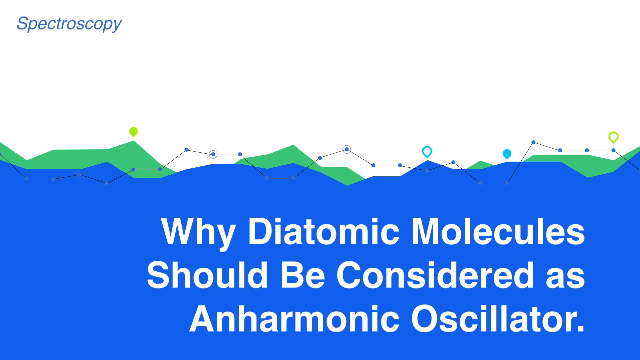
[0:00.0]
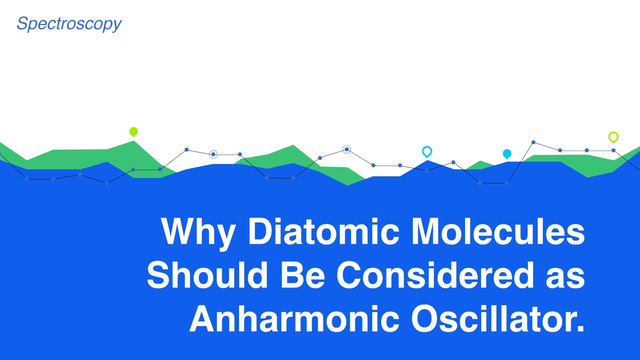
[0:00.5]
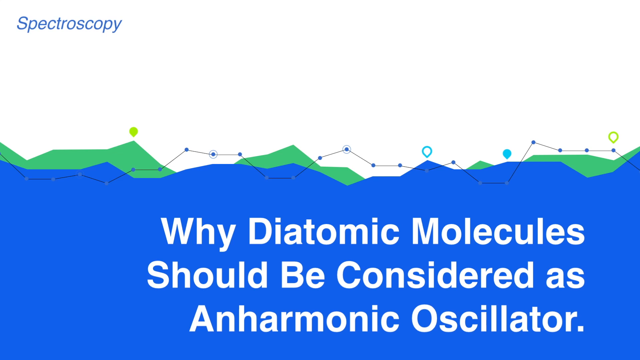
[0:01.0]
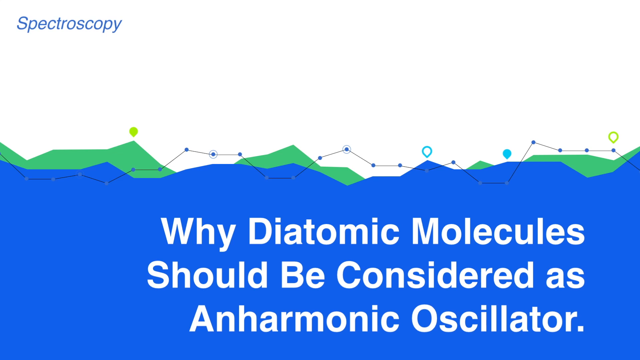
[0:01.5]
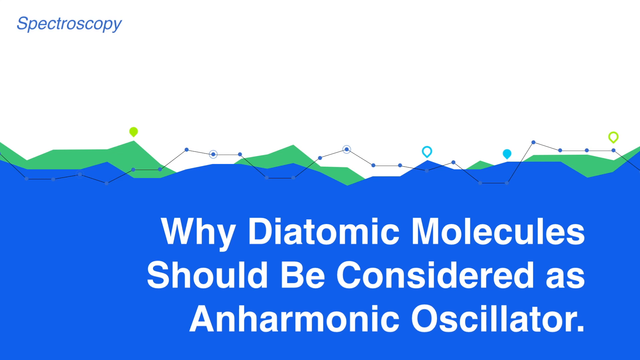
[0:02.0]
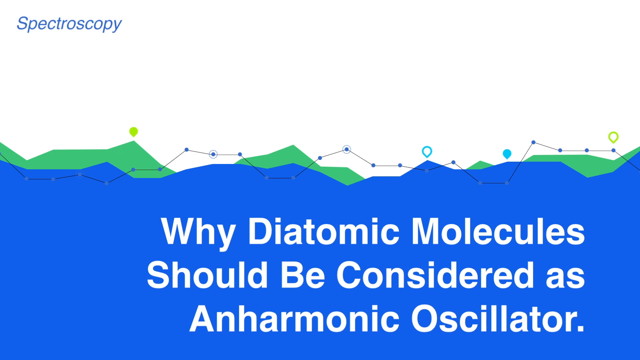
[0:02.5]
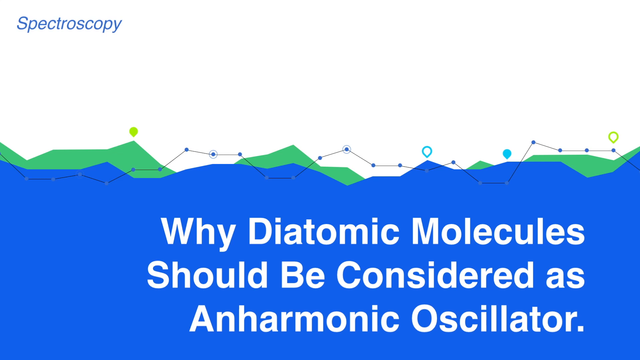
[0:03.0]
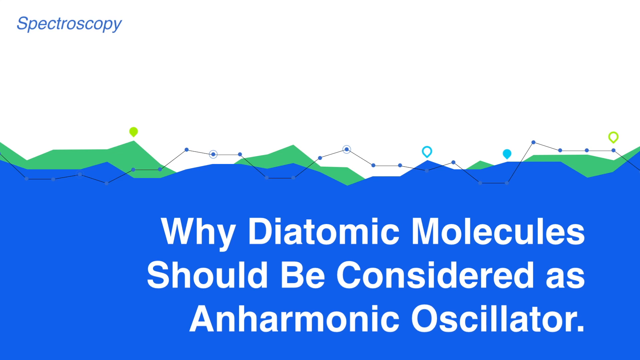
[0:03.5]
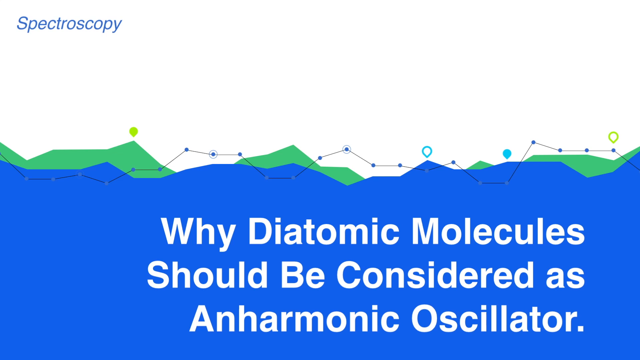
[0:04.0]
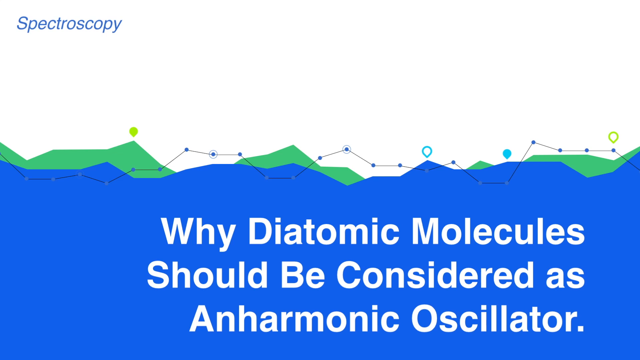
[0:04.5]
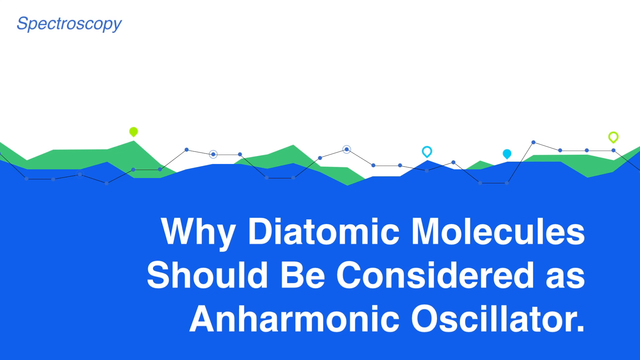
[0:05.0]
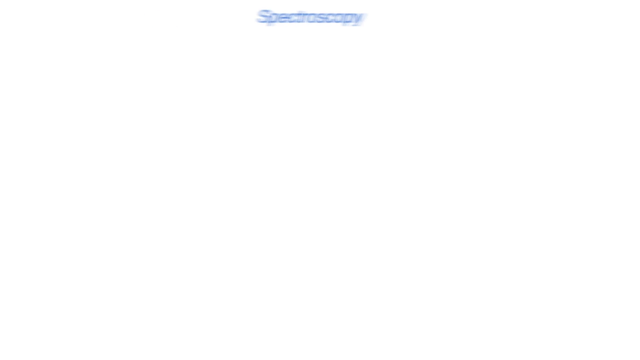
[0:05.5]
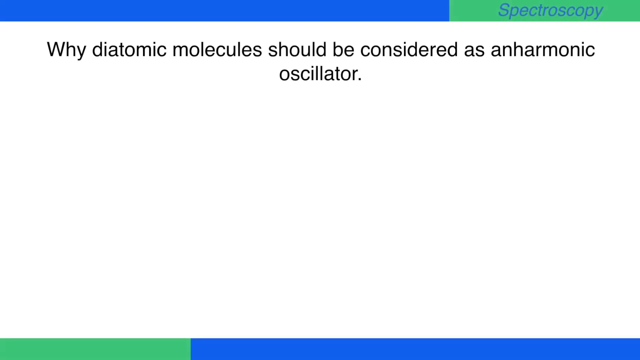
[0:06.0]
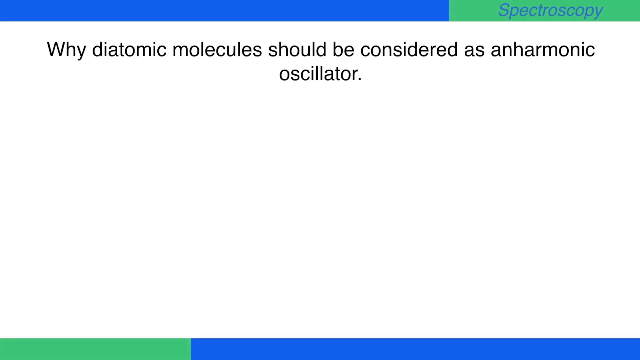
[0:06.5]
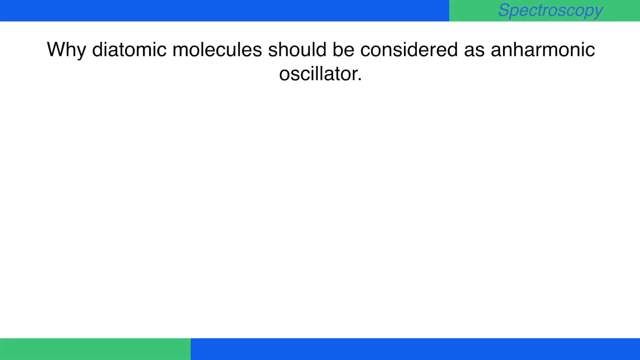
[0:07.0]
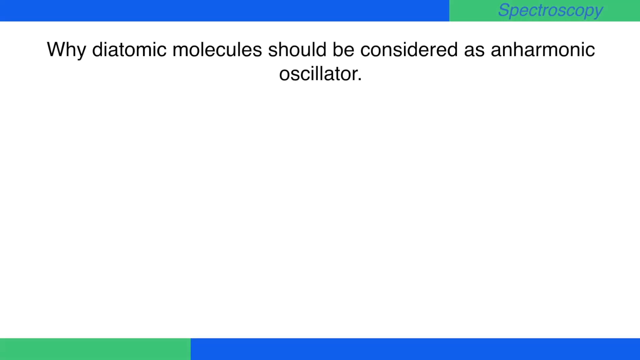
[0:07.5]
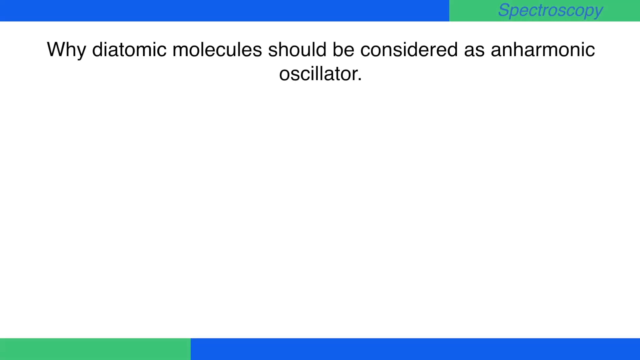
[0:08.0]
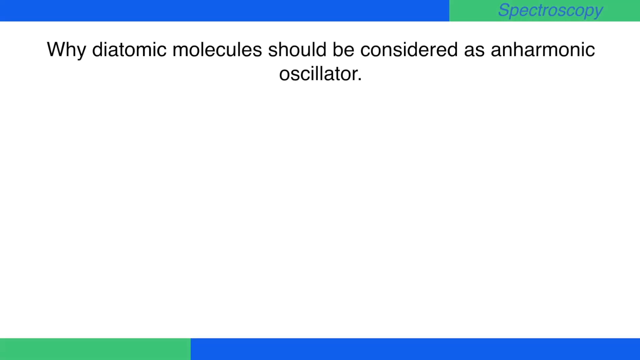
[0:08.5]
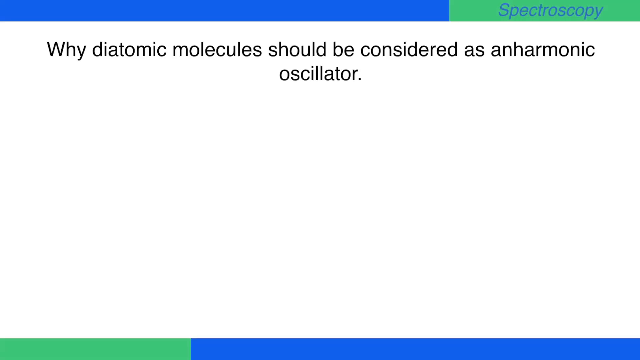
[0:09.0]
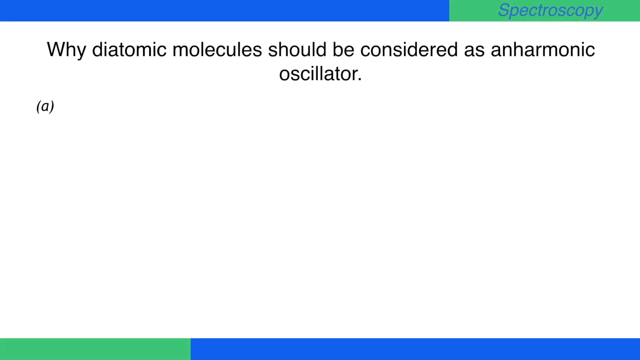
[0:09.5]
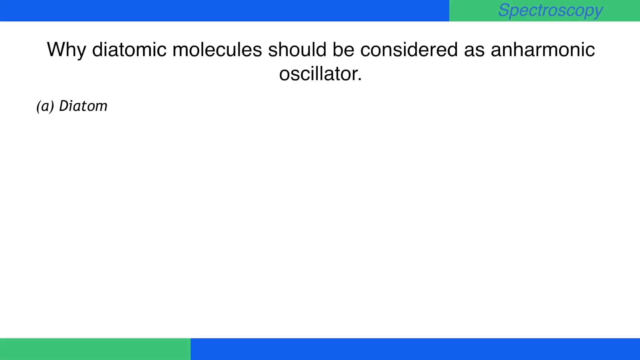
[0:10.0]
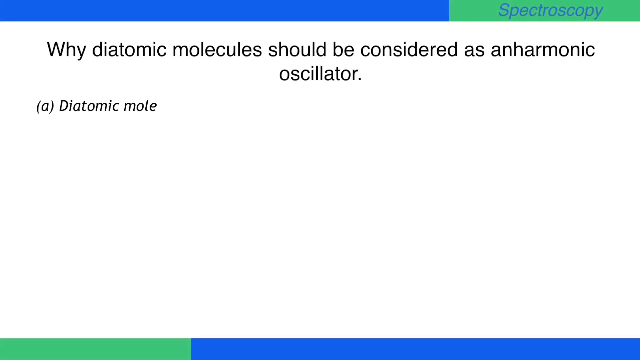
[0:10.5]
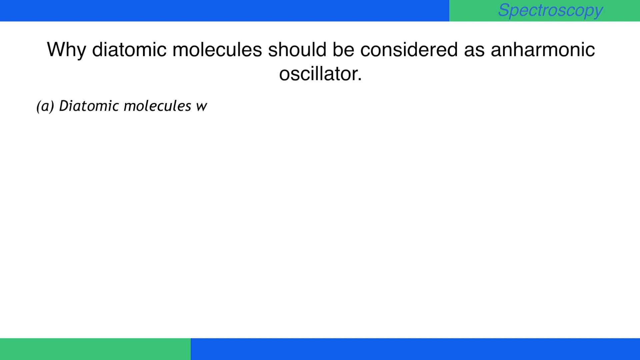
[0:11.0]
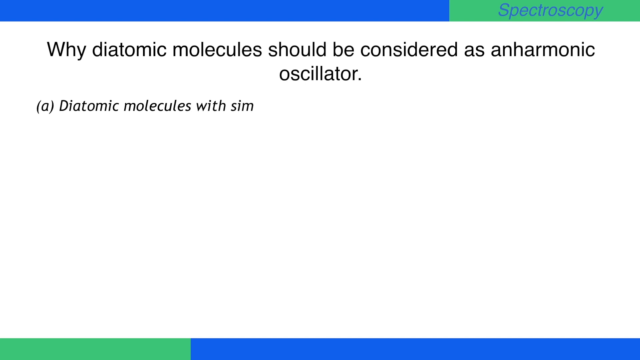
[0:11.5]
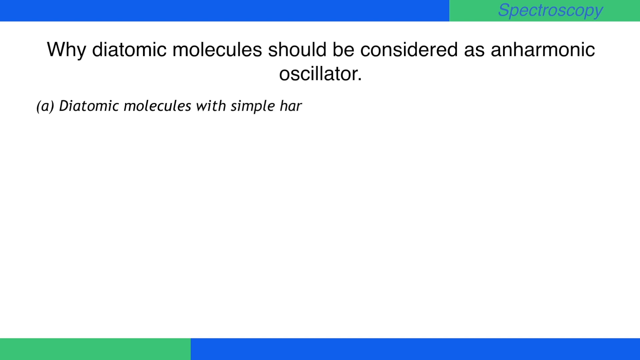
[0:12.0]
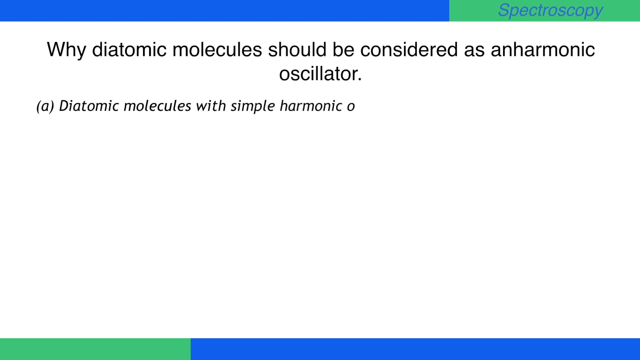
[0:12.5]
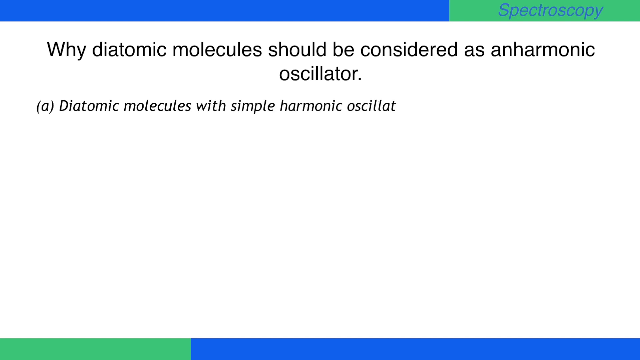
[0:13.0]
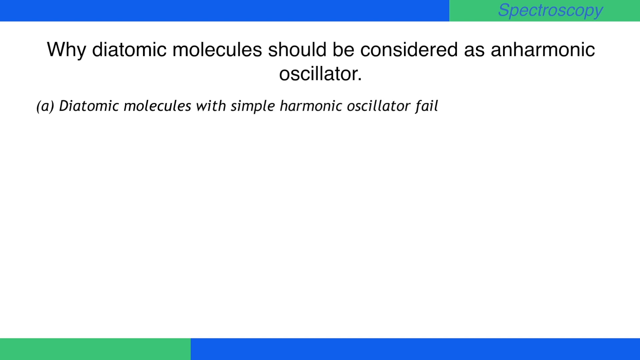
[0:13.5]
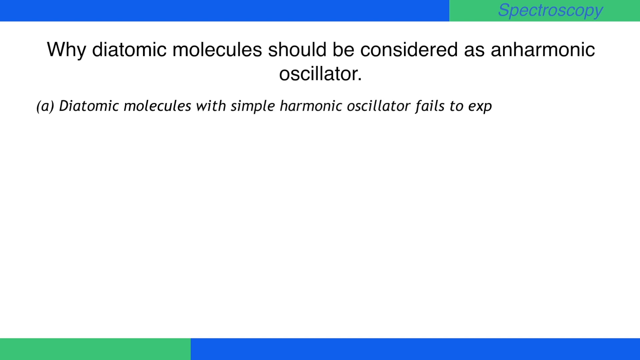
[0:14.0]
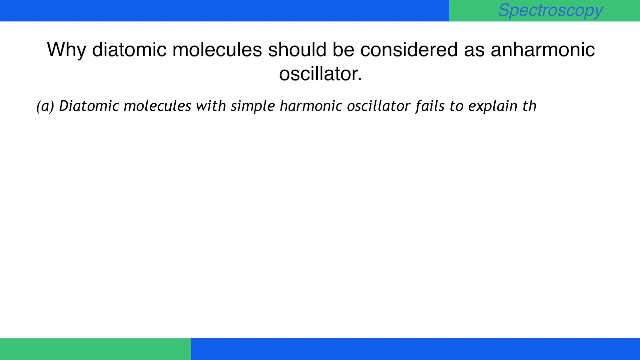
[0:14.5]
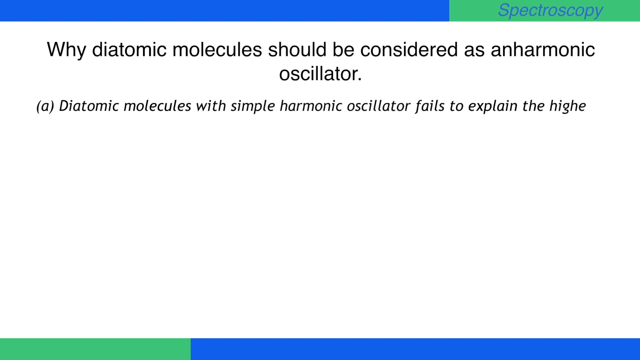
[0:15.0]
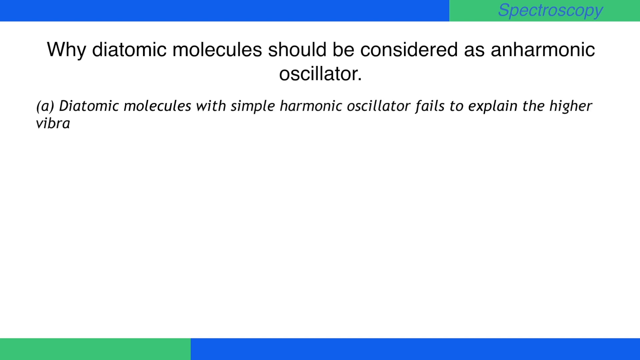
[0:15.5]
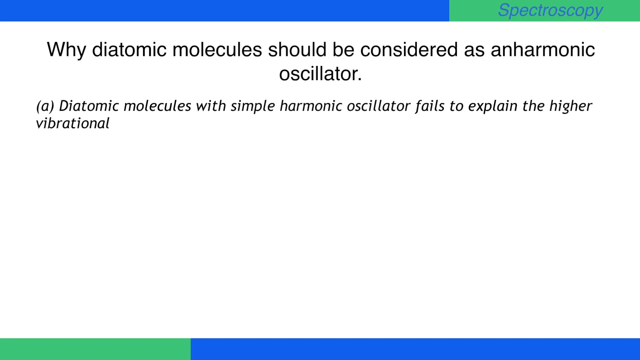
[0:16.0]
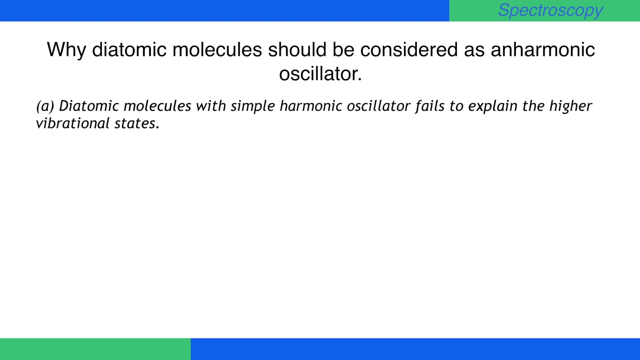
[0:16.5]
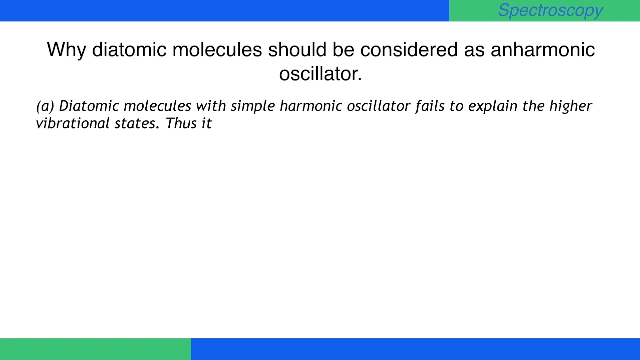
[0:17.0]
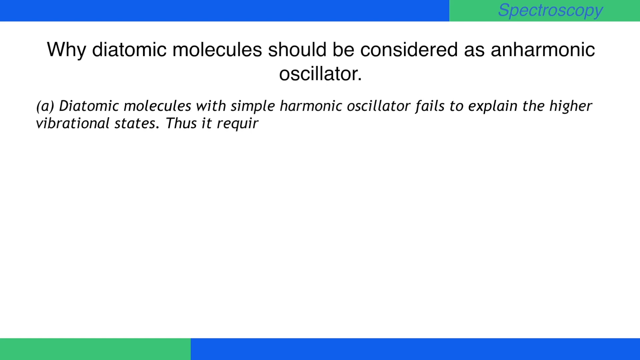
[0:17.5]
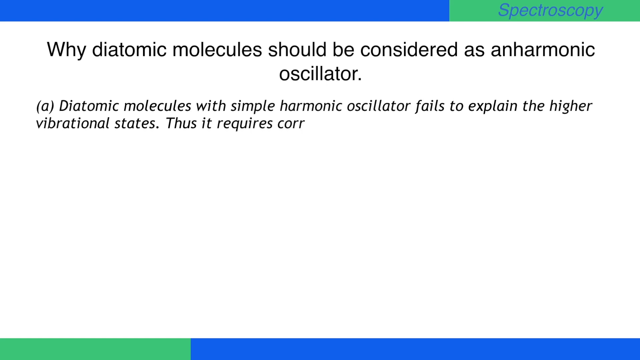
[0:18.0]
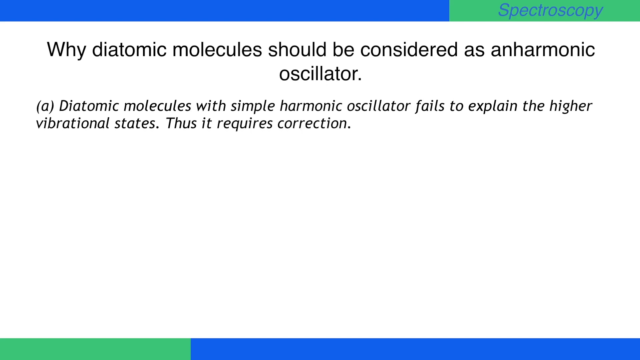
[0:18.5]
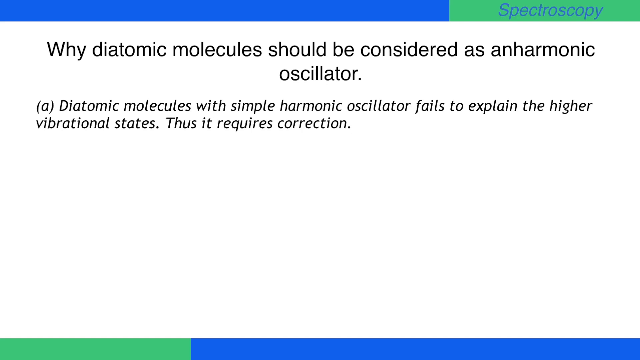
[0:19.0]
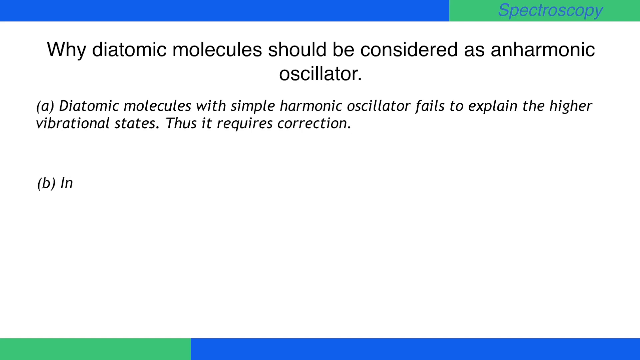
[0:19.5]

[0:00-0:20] The video opens with white text reading "why diatomic molecules should be considered as anharmonic oscillator" on a blue background. The top edge of the blue background has a jagged line shape, somewhat like a mountain skyline, and behind it are other green jagged shapes; together they look almost like a filled-in line graph in different colors. Next, the word "spectroscopy" appears across the top right, and the same heading, "why diatomic molecules should be considered as anharmonic oscillator," is shown in black text on a white screen. Letters and words are then typed out across the screen: the letter A, followed by "diatomic molecules with simple harmonic oscillator fails to explain the higher vibrational states, thus it requires correction." A band of color runs across the top of the screen, blue on the left side and green on the right, and a similar band, also in green, runs across the bottom.